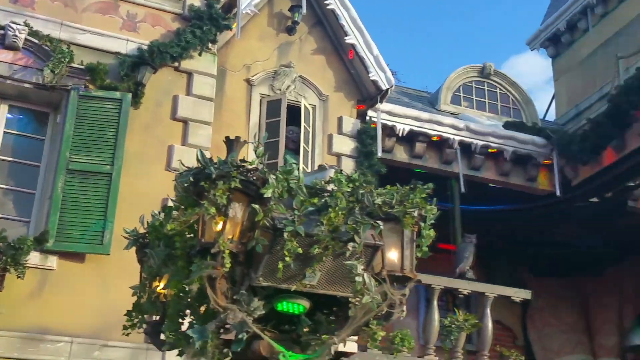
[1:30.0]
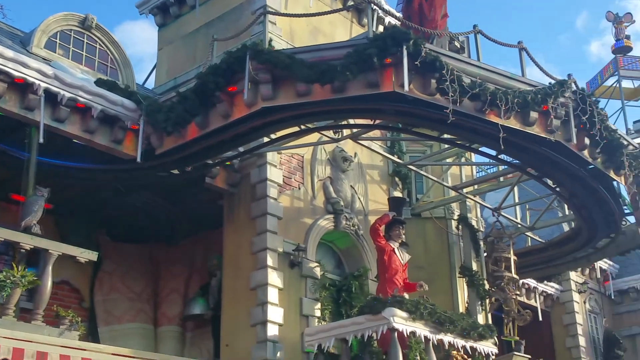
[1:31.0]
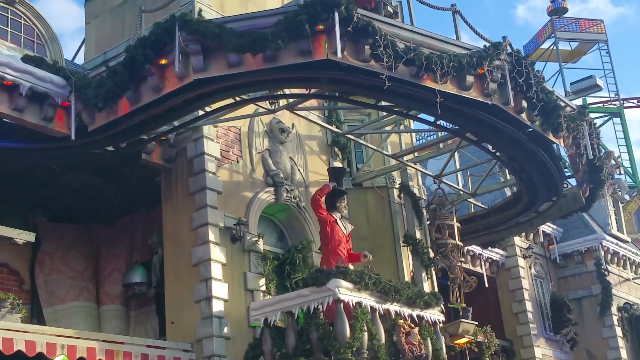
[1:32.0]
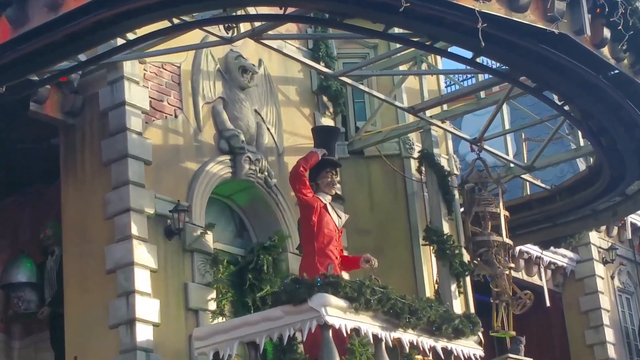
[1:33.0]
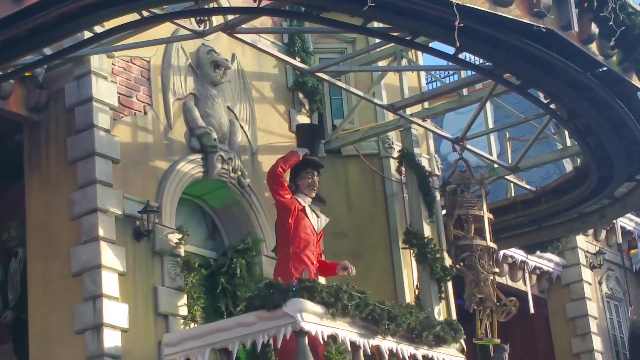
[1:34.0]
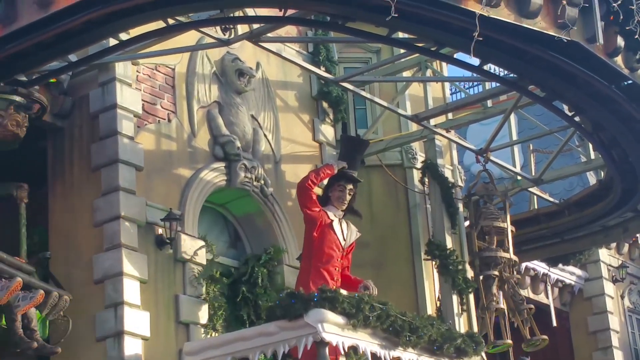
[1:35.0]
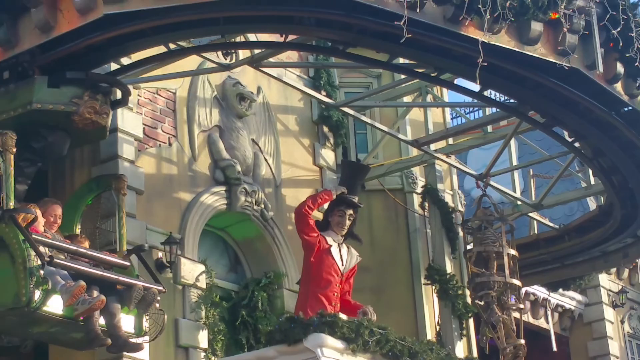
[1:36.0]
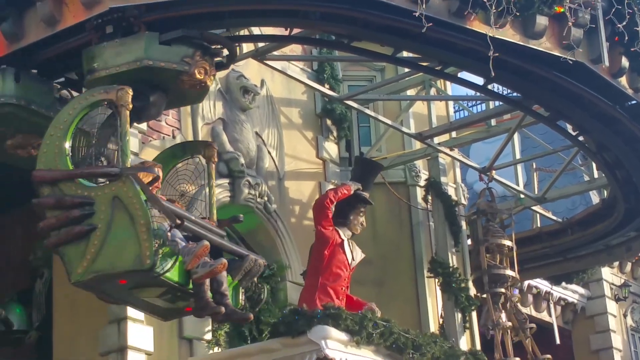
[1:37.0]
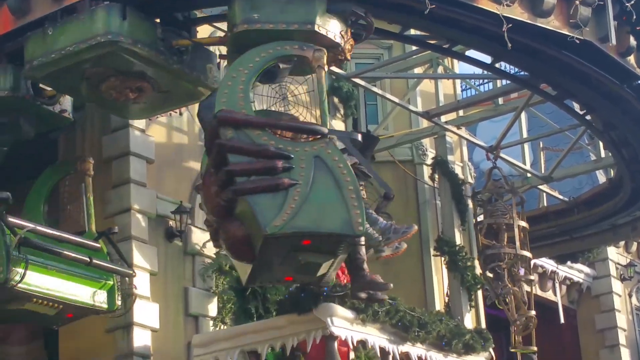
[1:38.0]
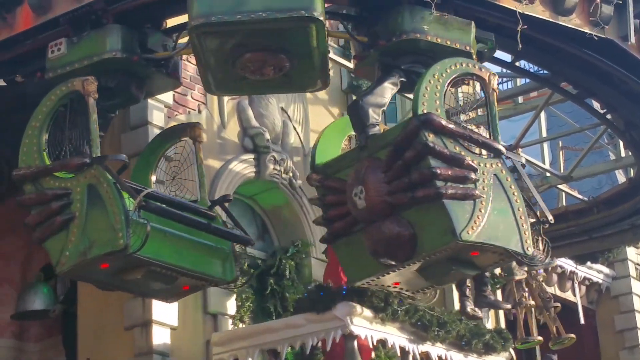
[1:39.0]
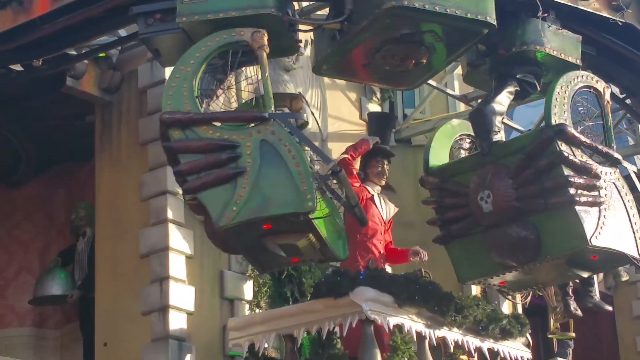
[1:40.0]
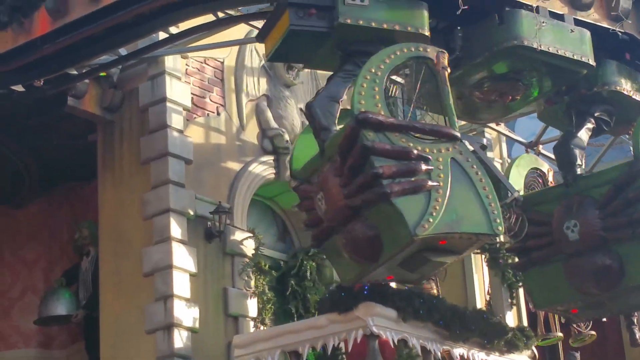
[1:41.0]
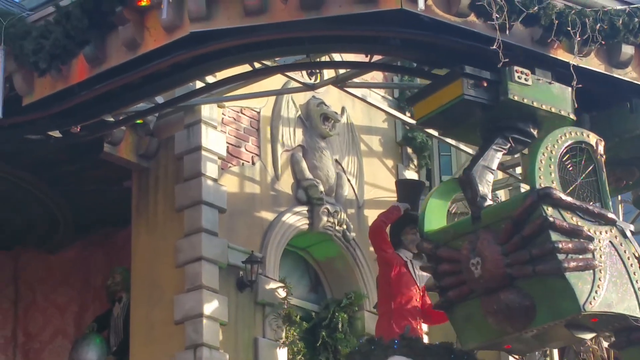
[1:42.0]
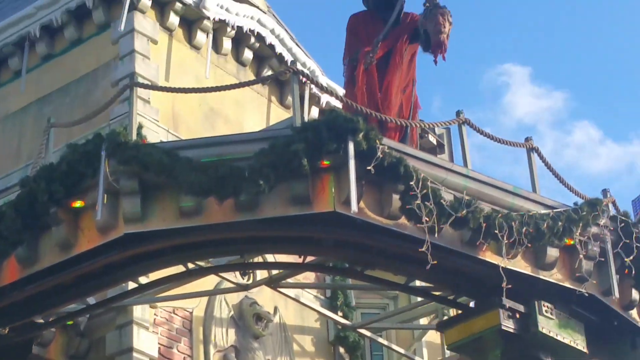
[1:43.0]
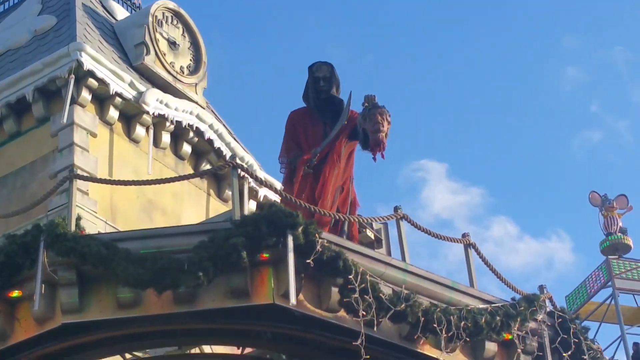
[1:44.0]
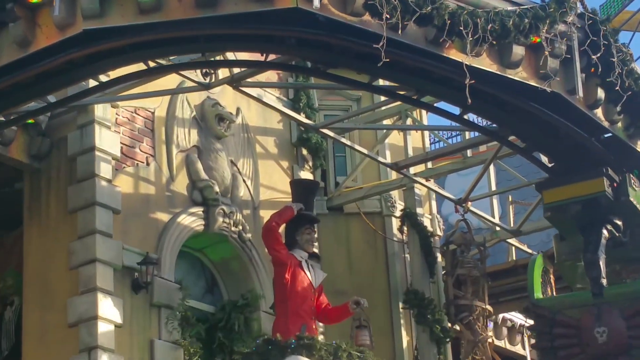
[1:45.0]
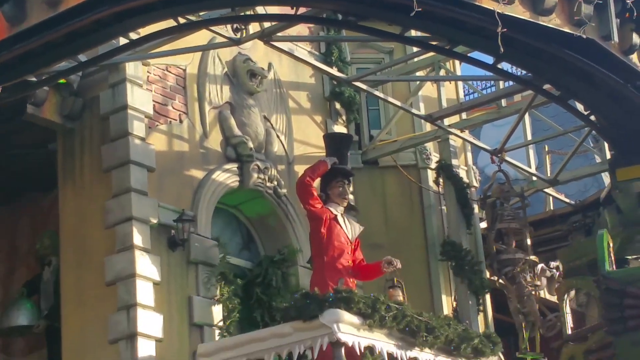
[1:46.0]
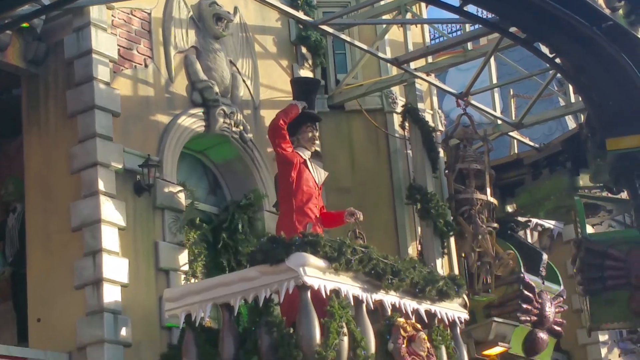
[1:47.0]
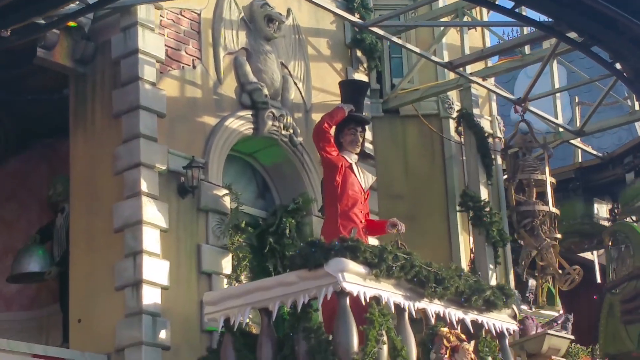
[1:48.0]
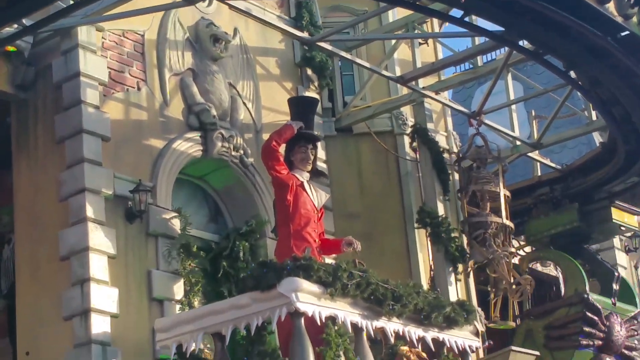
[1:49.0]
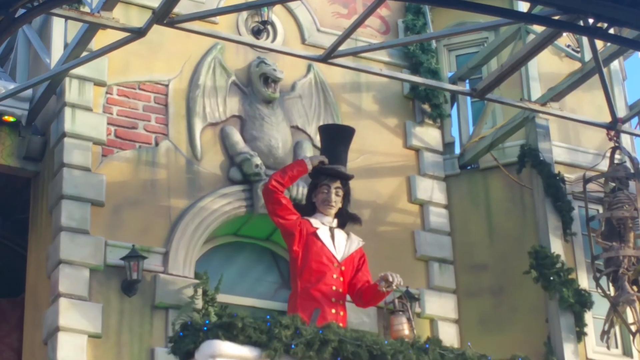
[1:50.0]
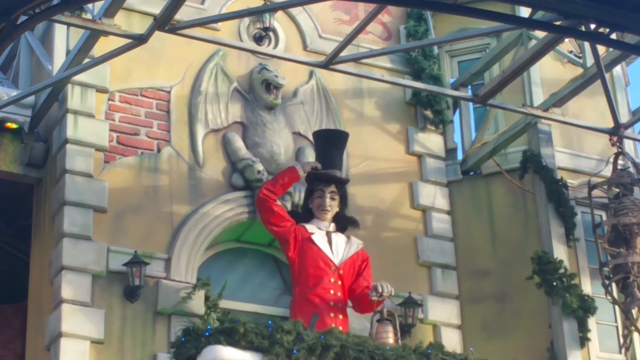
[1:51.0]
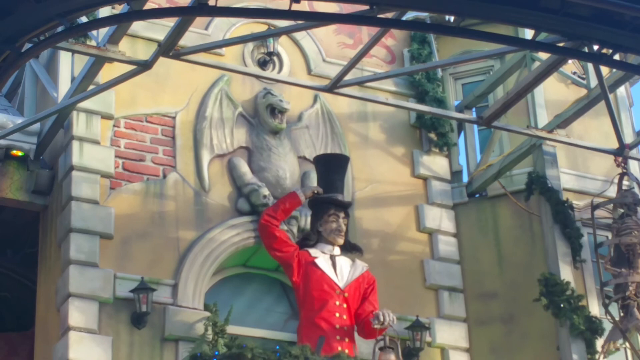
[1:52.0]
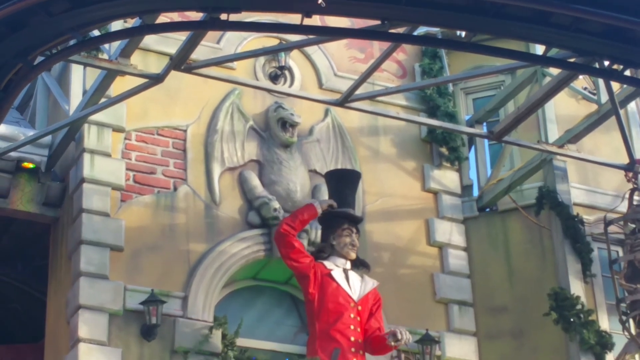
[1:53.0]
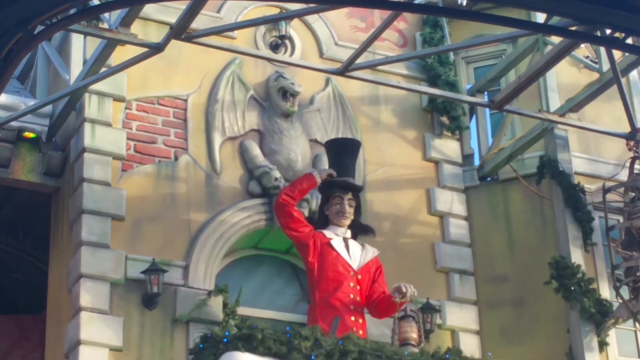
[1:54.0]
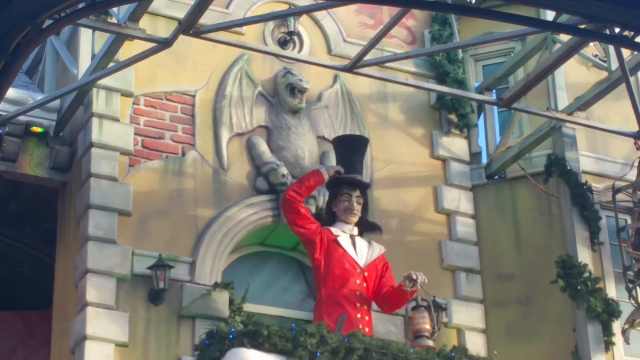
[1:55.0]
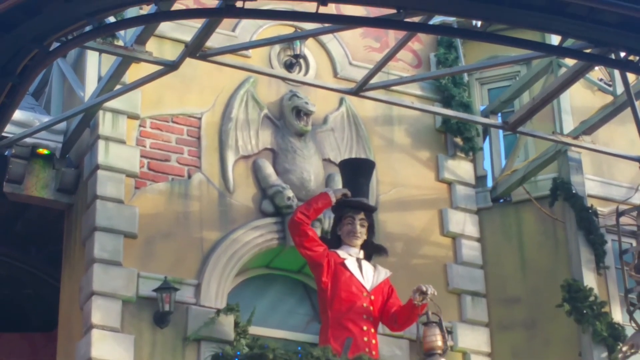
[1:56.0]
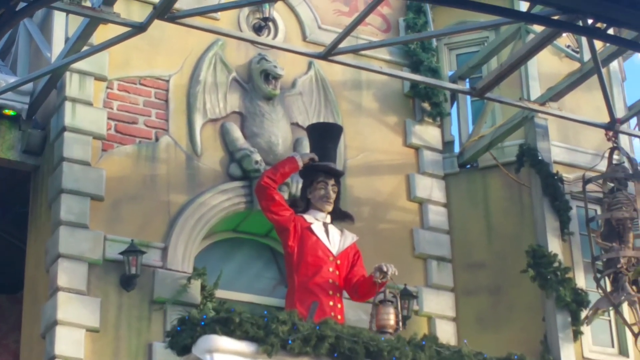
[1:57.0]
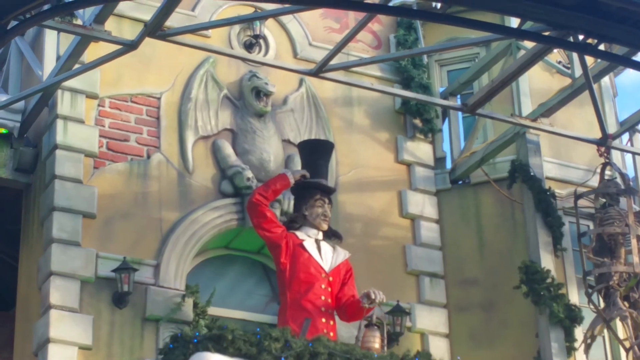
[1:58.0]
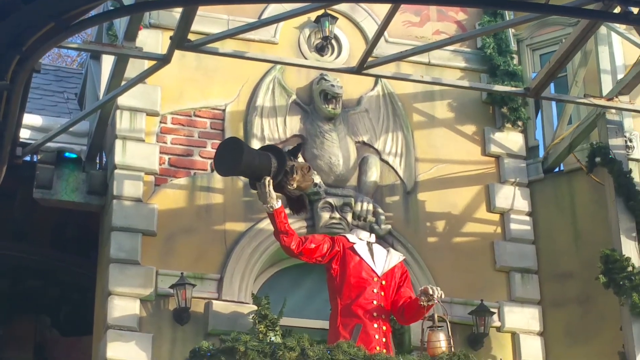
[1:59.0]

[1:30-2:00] The camera pans back over to the center of the home. On the second balcony, a man in a red and white jacket and a top hat grabs his hat. On the left side of the frame, a family of three kids and a mother rides a carnival-like ride, apparently a green trolley of some sort, with no one in the back seats. The man looks from side to side as the trolley passes, holding up what appears to be a lantern. The camera pans upward to the top balcony, where the other man, in a long red cloak and wearing a mask, holds a severed head. After a short cut, the camera moves in closer to the man in the top hat and red and white jacket; his mouth moves as if he is talking, and he takes off his head and holds it in his hand.